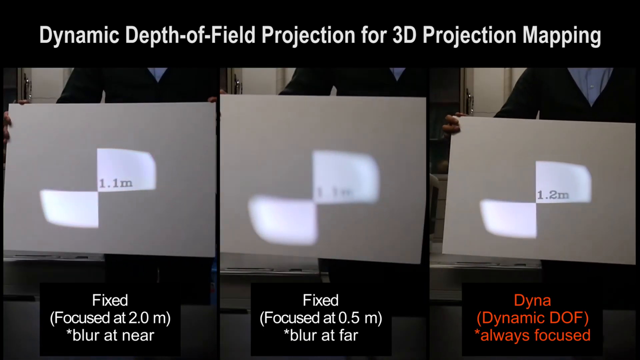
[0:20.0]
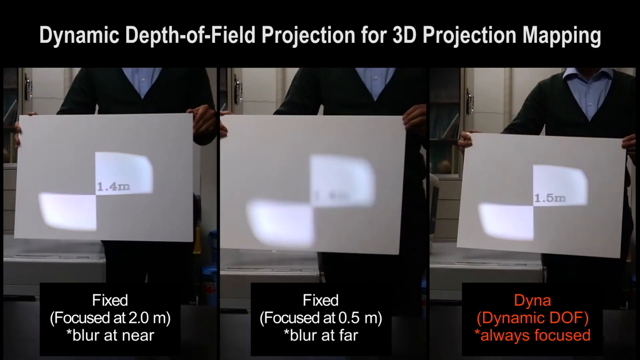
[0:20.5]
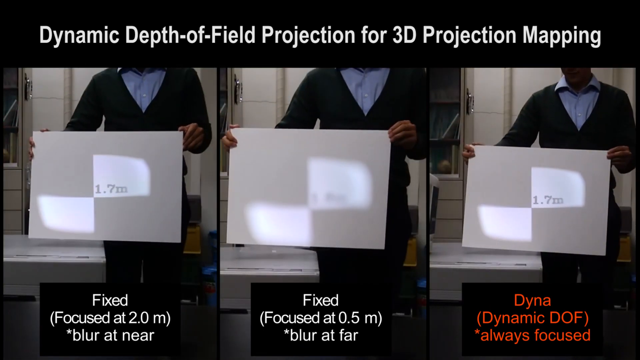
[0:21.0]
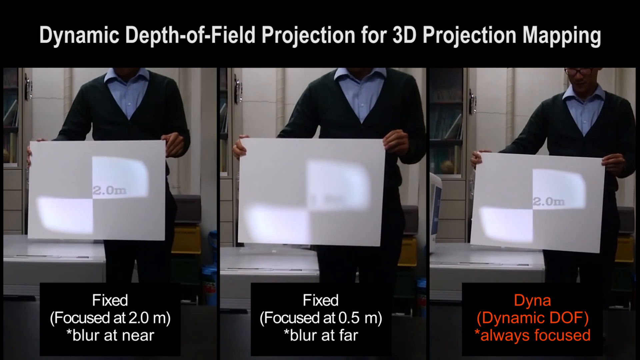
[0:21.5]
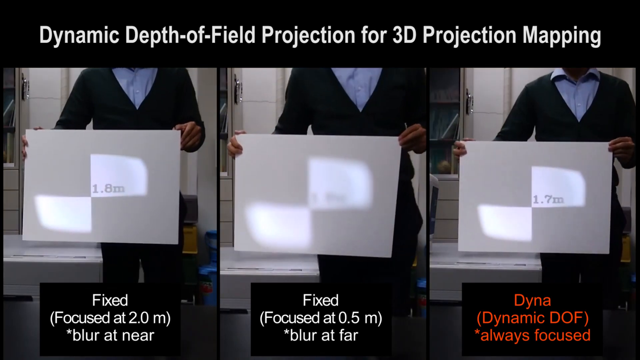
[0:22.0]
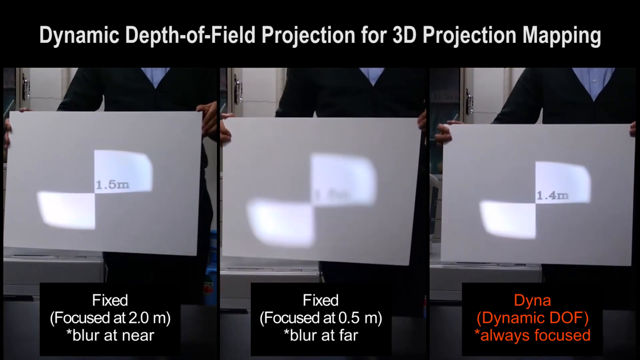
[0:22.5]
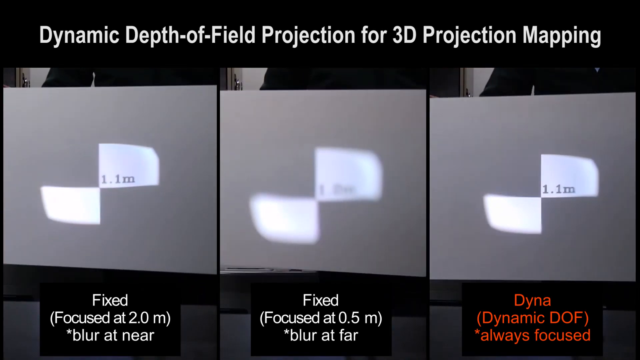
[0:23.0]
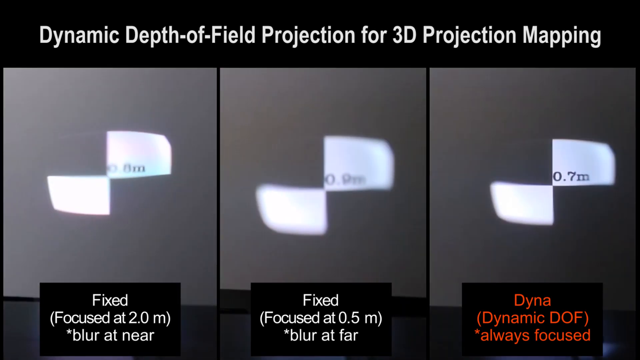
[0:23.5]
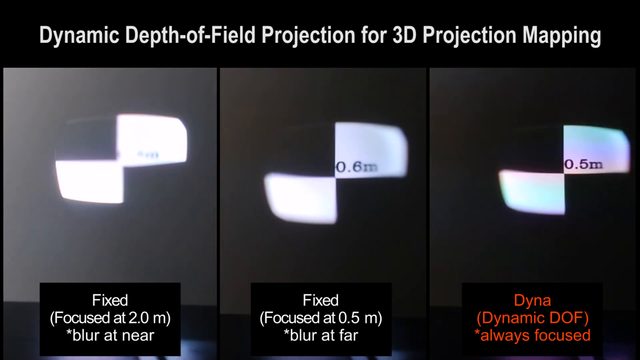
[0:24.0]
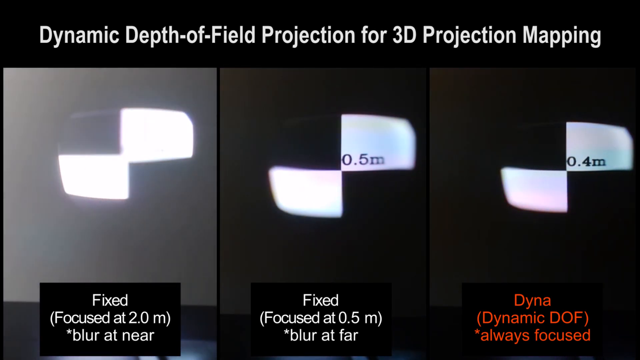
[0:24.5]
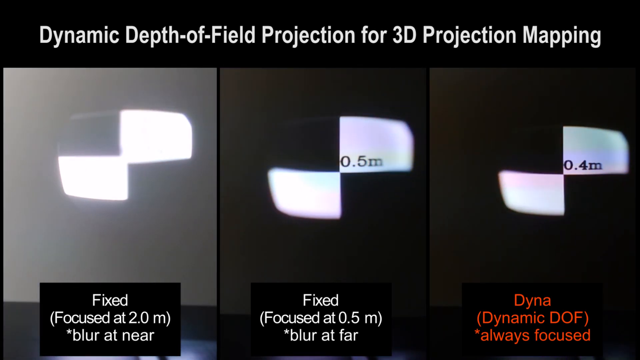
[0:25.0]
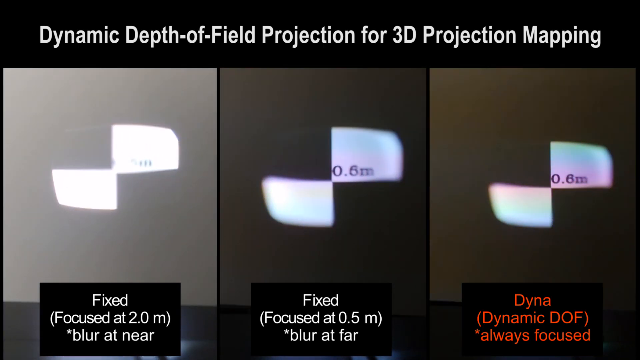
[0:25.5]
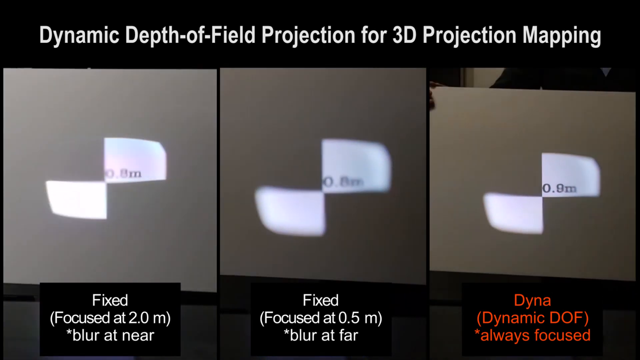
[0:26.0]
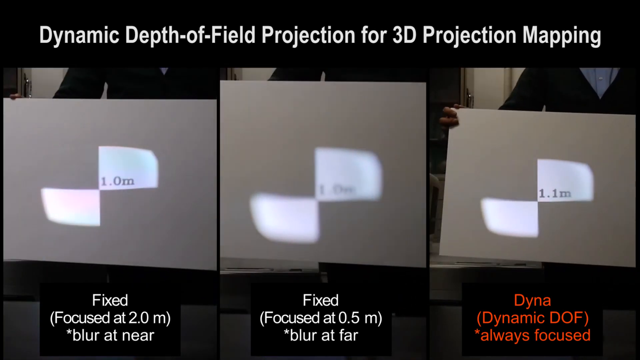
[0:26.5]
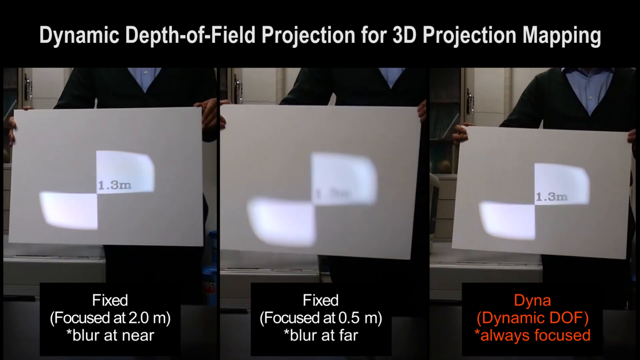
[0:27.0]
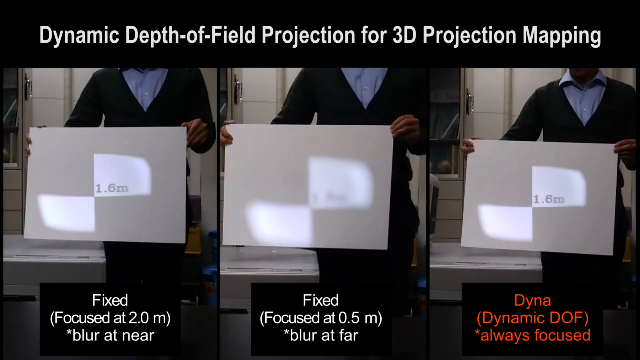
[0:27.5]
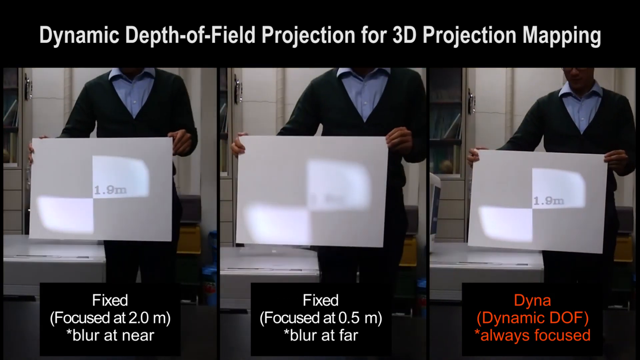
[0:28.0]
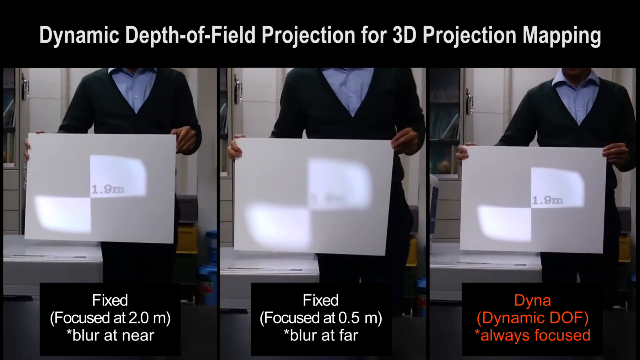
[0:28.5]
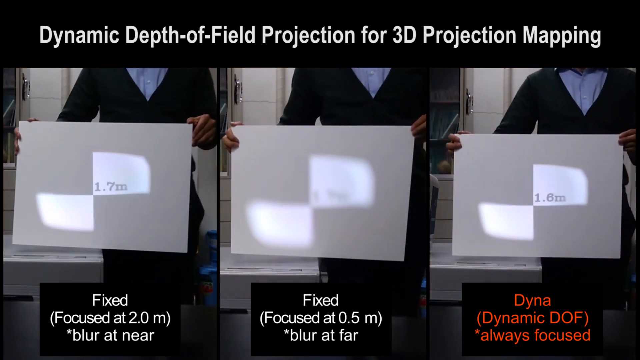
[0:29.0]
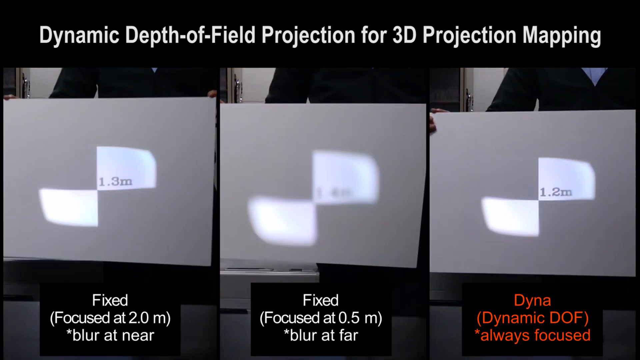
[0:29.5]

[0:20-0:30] An African-American man appears in three split screens, holding a white piece of paper in each of his hands. There are squares on each paper, adjacent to each other at an angle, with small numbers in the bottom corners. The view then pulls back in all three screens. At the bottom of each of the three sections there is writing; on the third one it says "D-Y-E-A." There is additional writing underneath that cannot be read.